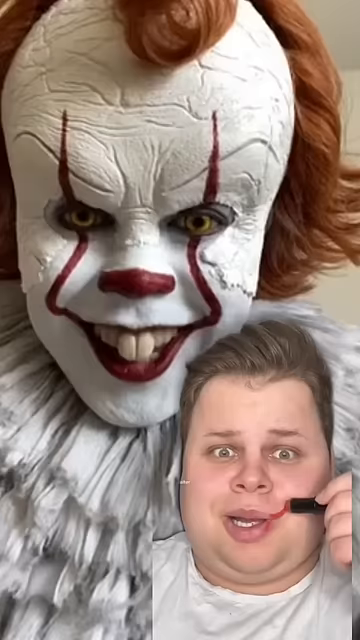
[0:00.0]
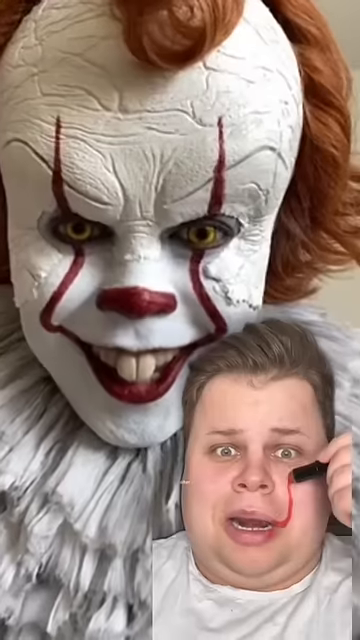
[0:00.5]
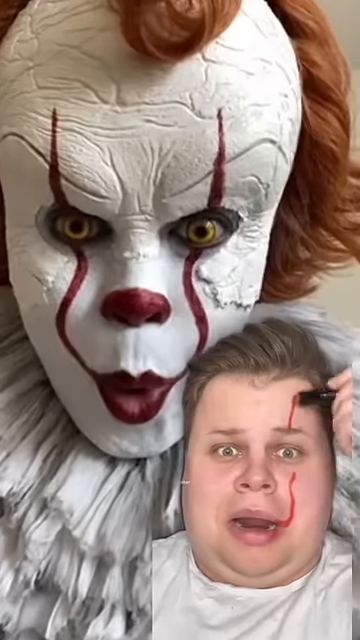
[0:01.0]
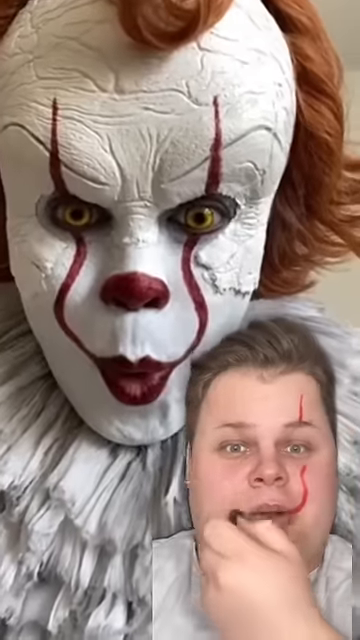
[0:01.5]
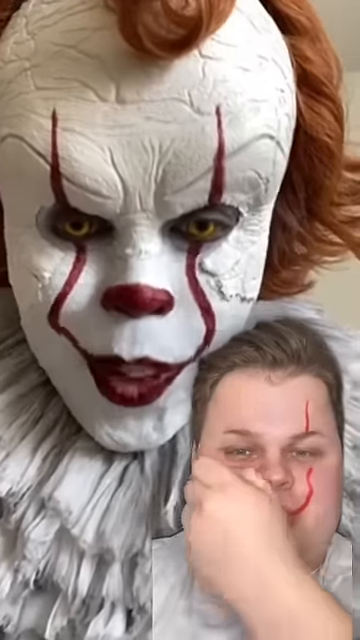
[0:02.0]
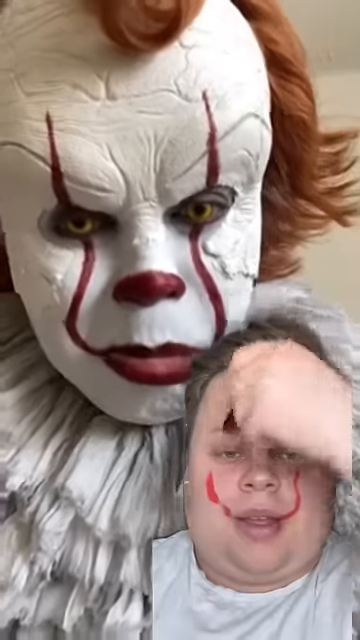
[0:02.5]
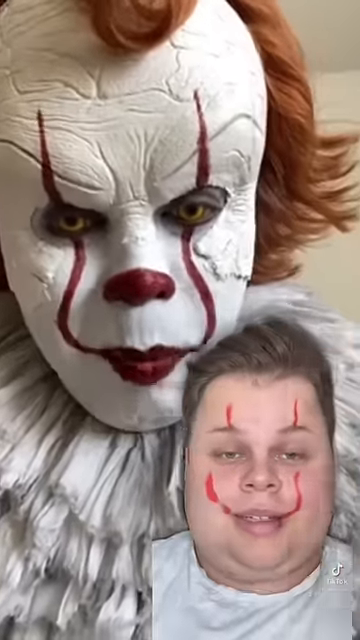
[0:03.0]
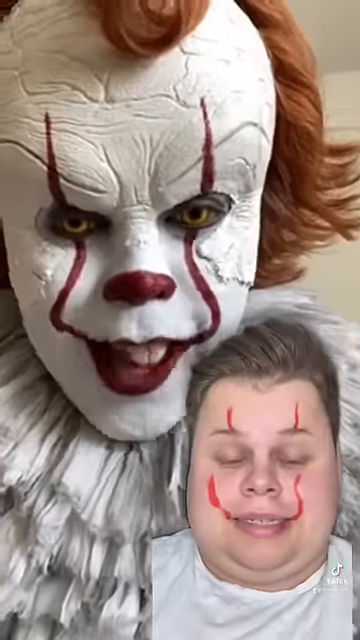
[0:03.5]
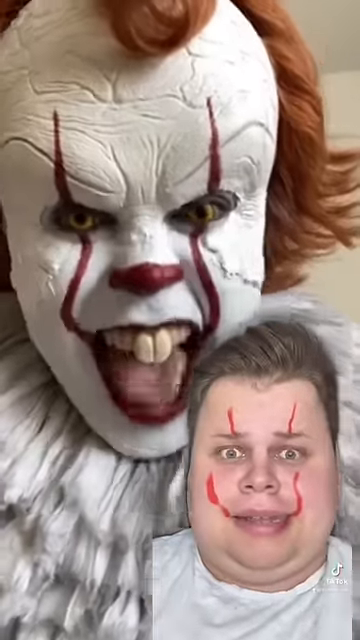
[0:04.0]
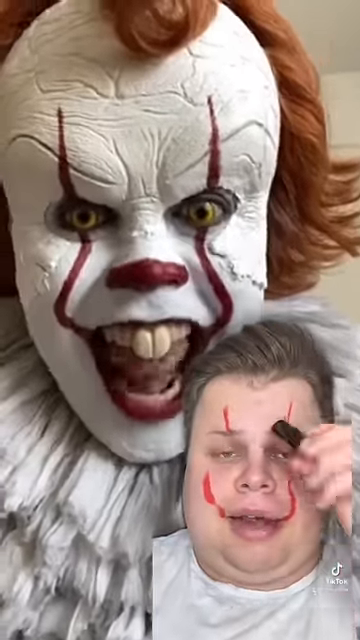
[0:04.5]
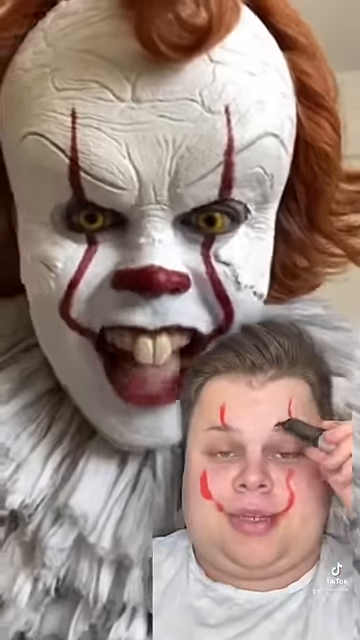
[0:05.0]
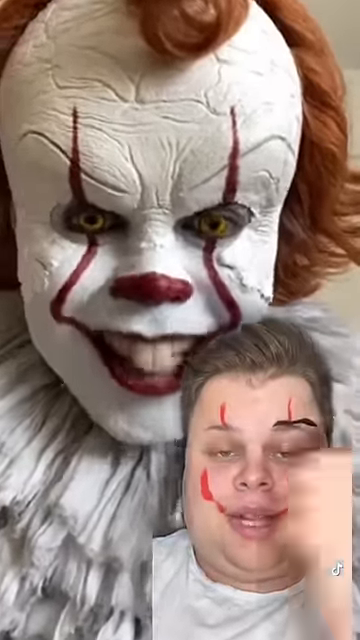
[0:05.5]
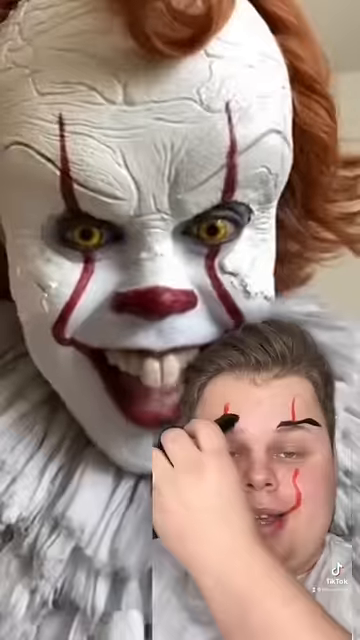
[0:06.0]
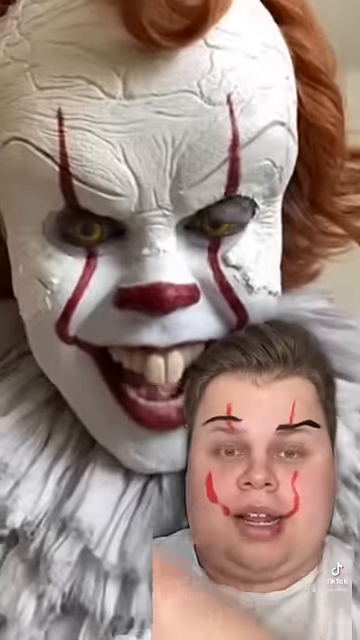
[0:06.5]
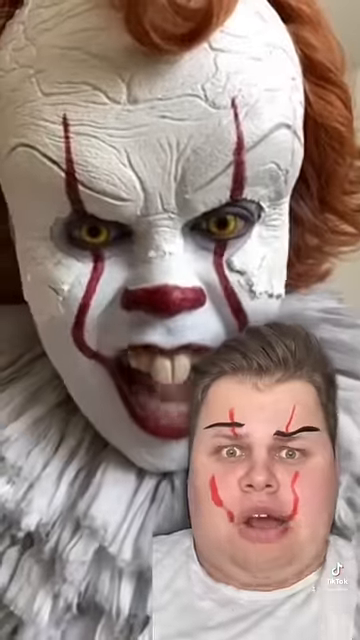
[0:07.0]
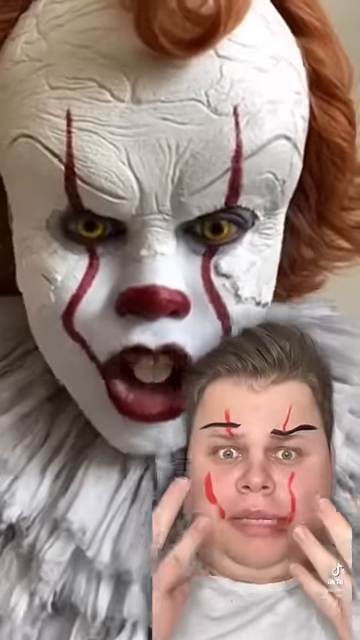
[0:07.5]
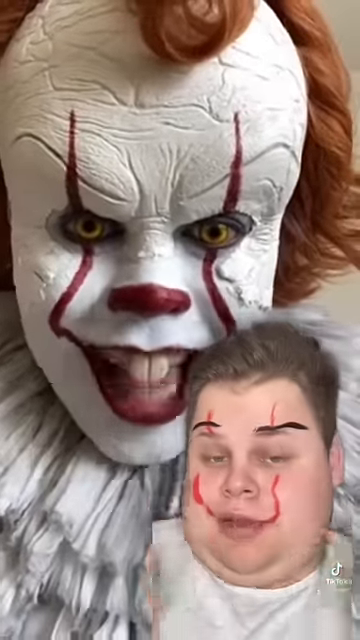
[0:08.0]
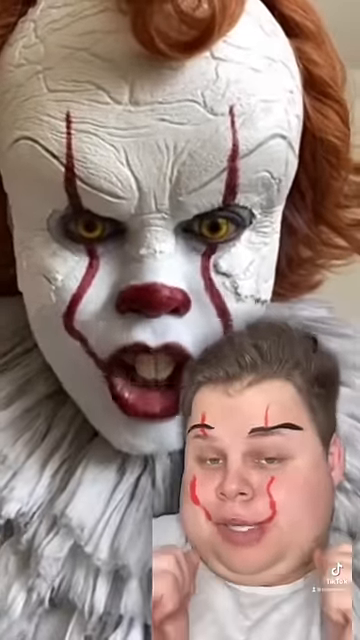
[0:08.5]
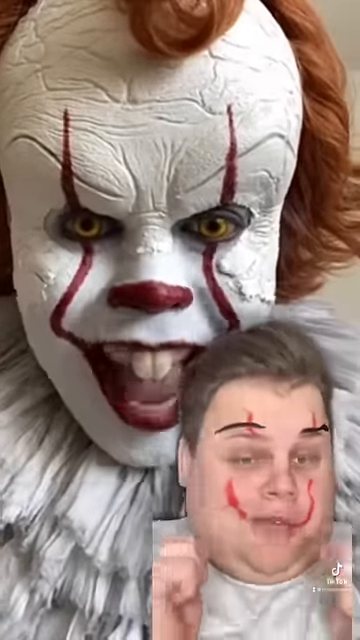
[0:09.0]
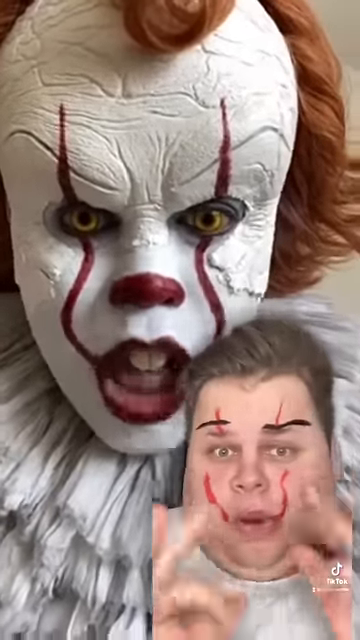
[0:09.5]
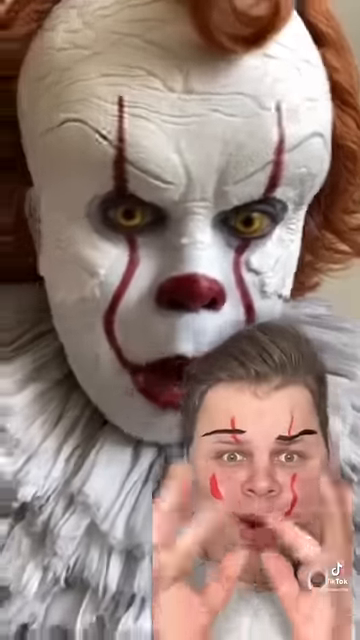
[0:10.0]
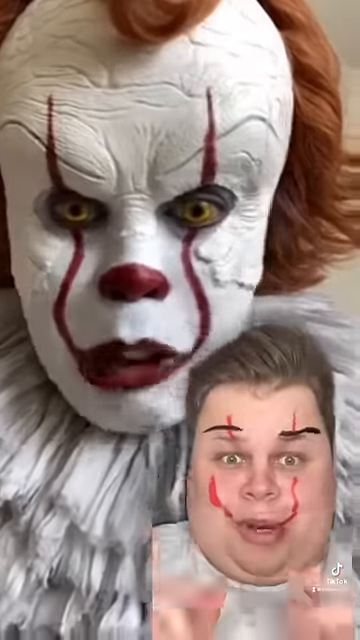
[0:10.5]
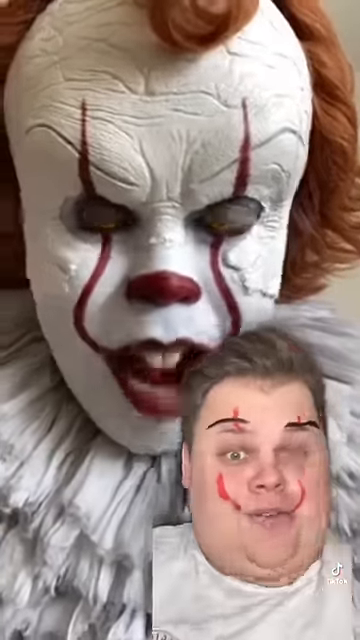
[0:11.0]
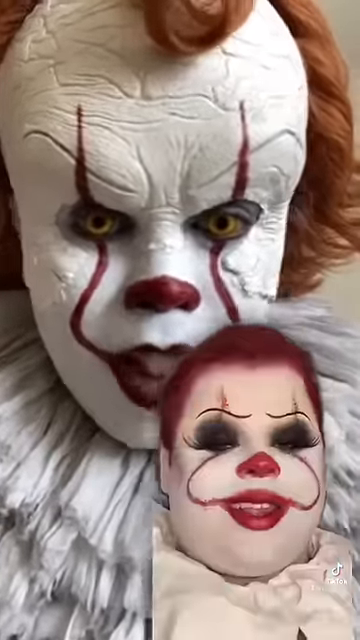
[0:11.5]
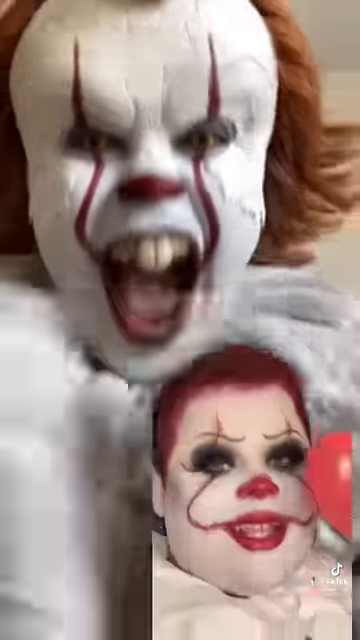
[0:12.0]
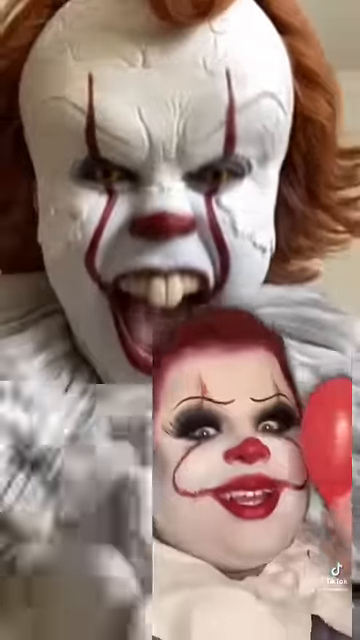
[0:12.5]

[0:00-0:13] The face of an evil clown appears, with two thin vertical red wavy lines running from either side of the forehead through both eyes to meet at the corners of the clown's red mouth. The tip of the clown's nose is also covered in red paint, and the clown has two very long front or buck teeth. The clown's face has thick, white, cracked, plaster-like paint, and he wears an orange wig with a receding hairline. He is filmed talking directly at the camera and laughing. At the same time, in the bottom right corner, another video shows a young man applying lipstick to his face to mimic the clown's look. He draws a red line up his face with lipstick in a similar way, then uses a black pen to draw over his eyebrows. Finally, the finished result is shown, looking somewhat similar to the image in the background: the young man has copied the orange hair, the white pancake makeup and the squiggly line up the face, but the eyes in his version seem more friendly.